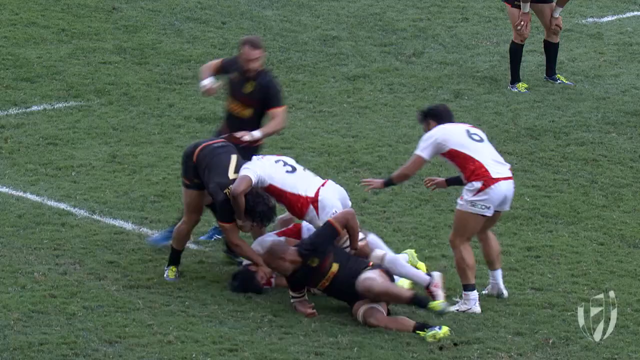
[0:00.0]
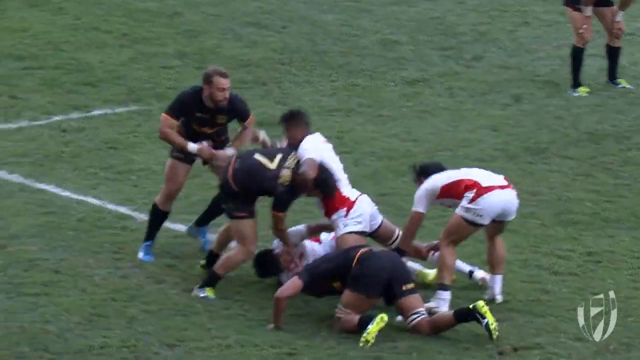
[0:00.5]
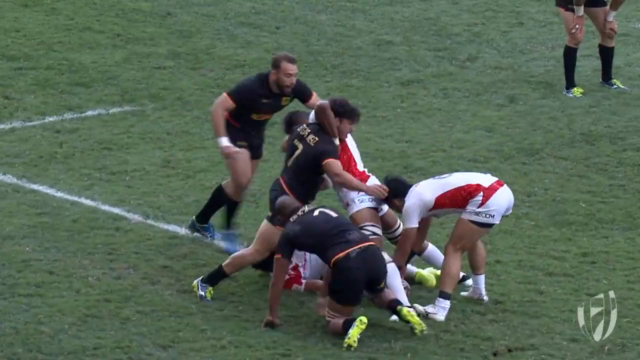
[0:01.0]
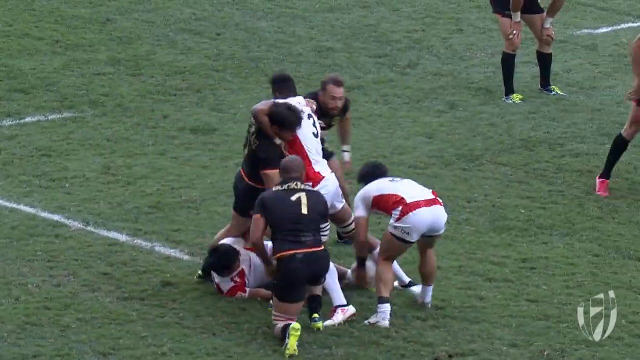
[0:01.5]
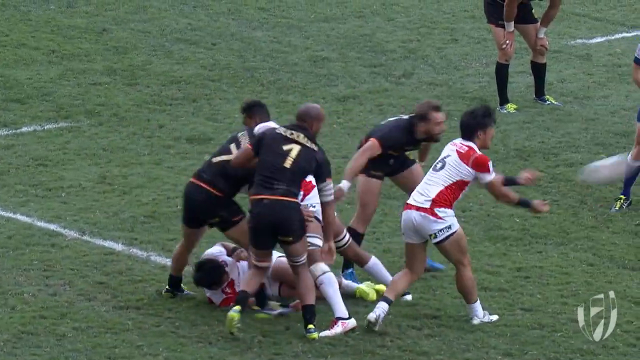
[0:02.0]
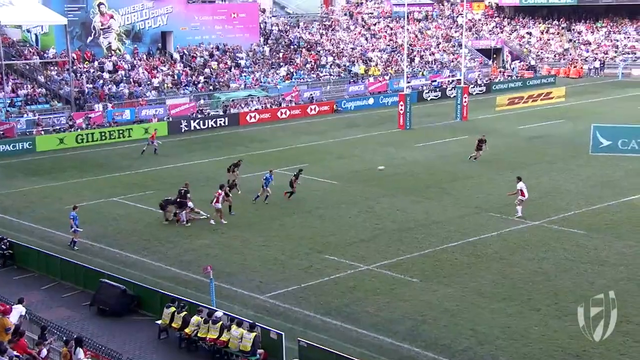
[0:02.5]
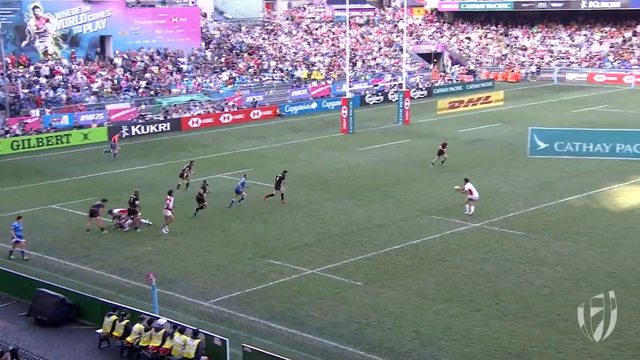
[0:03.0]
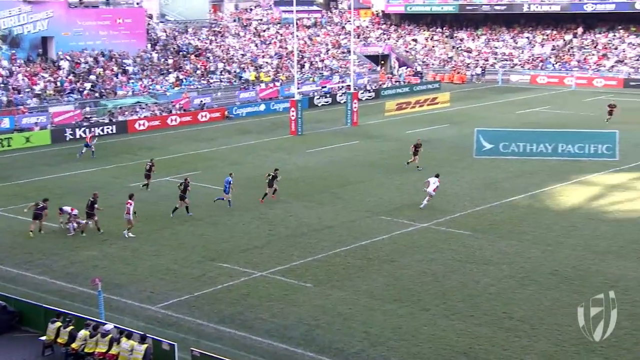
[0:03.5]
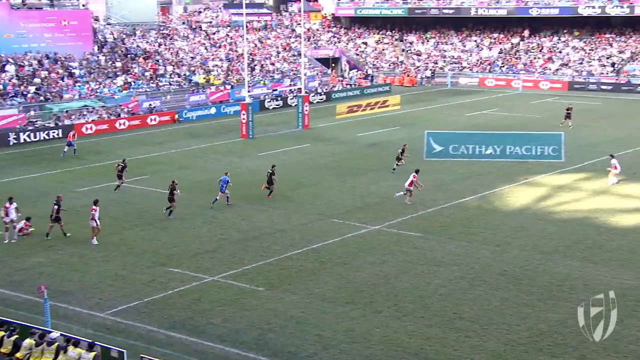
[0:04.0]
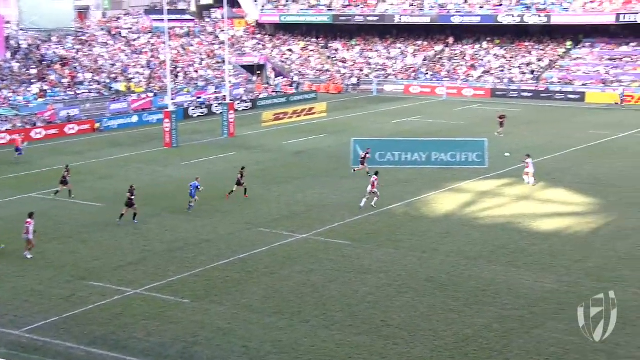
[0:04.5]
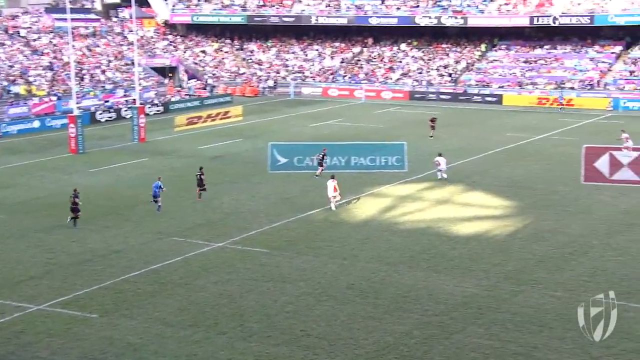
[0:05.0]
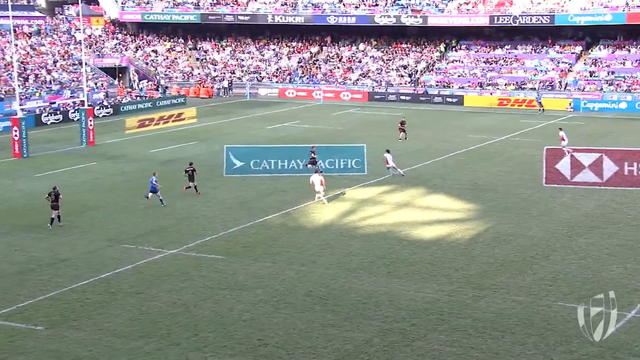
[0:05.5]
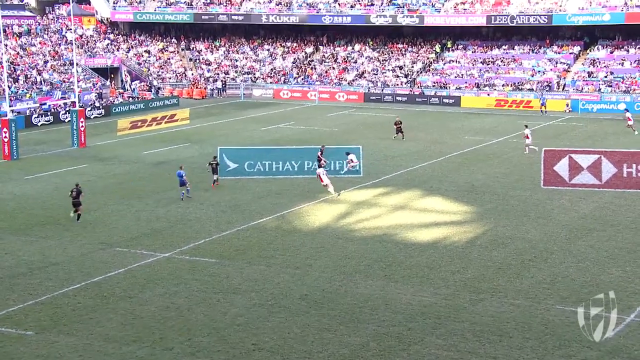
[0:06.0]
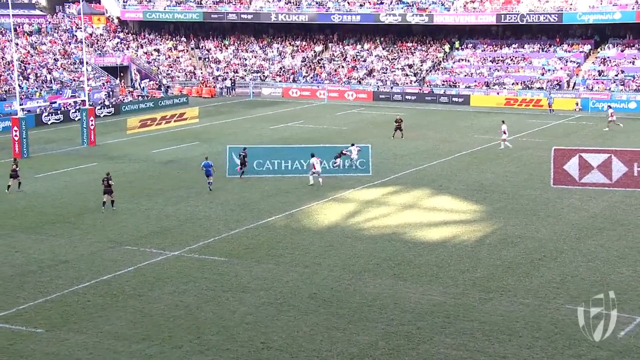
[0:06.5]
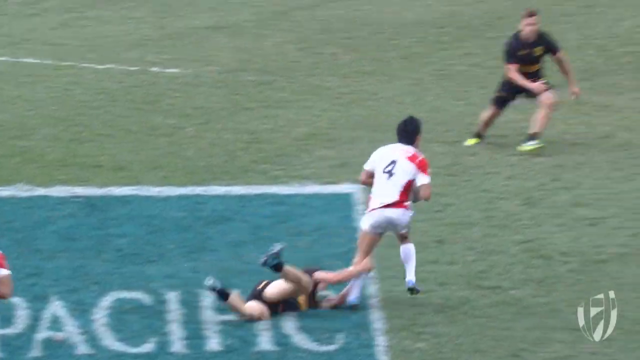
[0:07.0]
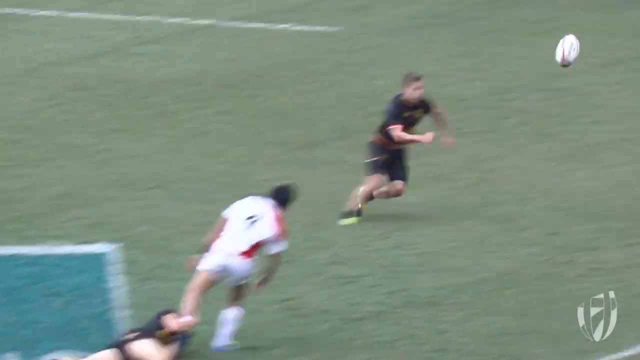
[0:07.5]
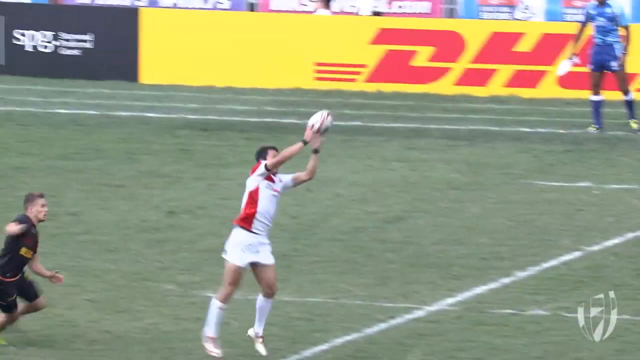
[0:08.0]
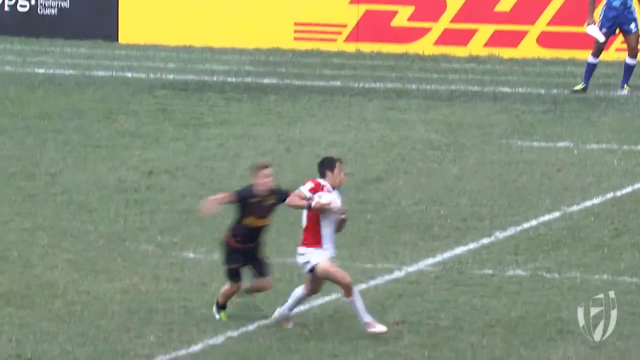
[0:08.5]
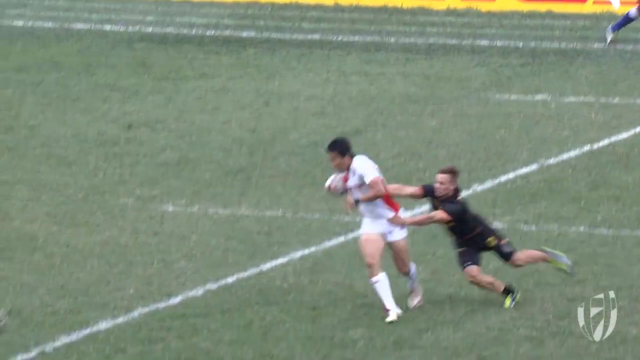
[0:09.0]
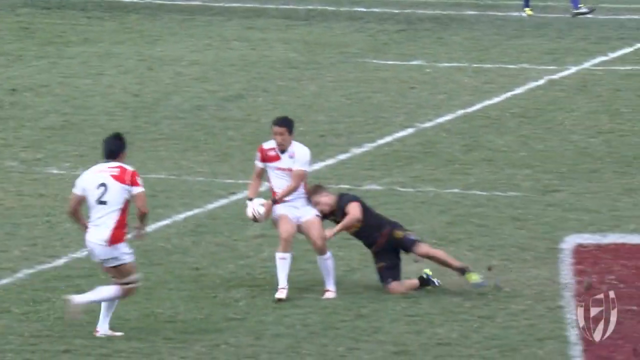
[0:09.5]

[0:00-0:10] The scene is on a field, and the game looks like rugby. Three men wear black uniforms: black T-shirts on top and black shorts. The one with his back to the camera has a white number one on his back. Two players from the other team are in the main area in white uniforms with red on the sides and across the back of the waist, as seen on the man on the right. They all scramble for the ball. A player in white gets it and hikes it from the upper left corner toward the middle of the field. The player in the middle gets it and hikes it to a player further down the field. That player runs toward the upper right corner and hikes it to a player in the upper right corner, who starts getting tackled by another man. The field is bright green and marked with white lines, and the ball is generally white.